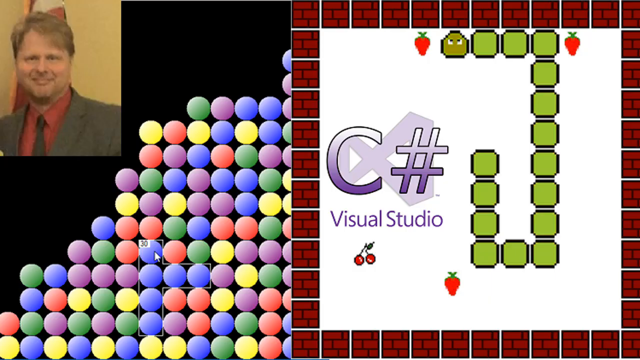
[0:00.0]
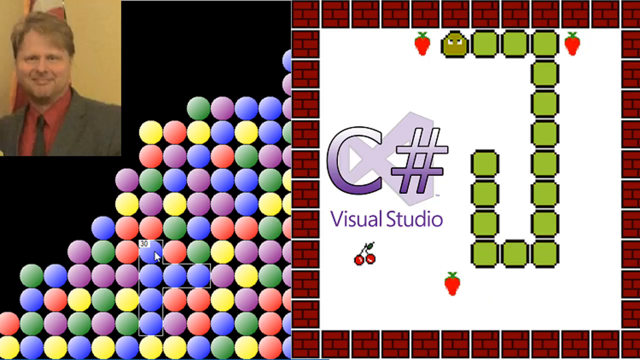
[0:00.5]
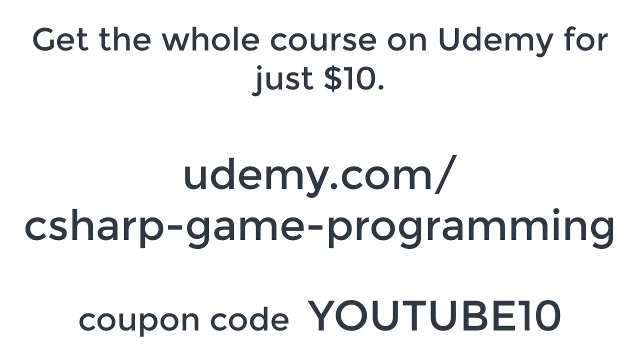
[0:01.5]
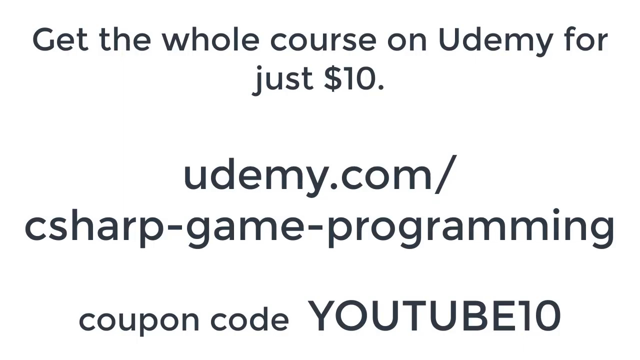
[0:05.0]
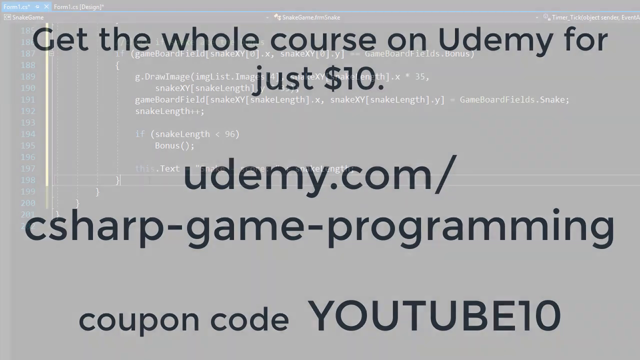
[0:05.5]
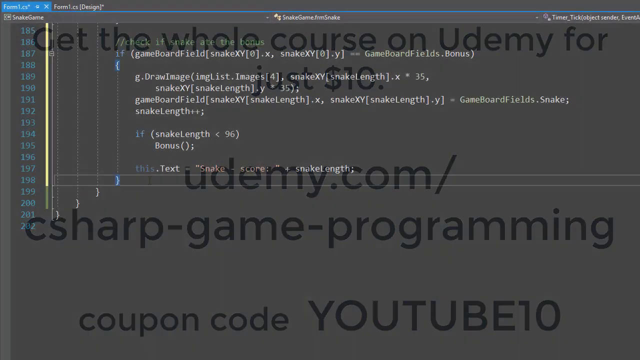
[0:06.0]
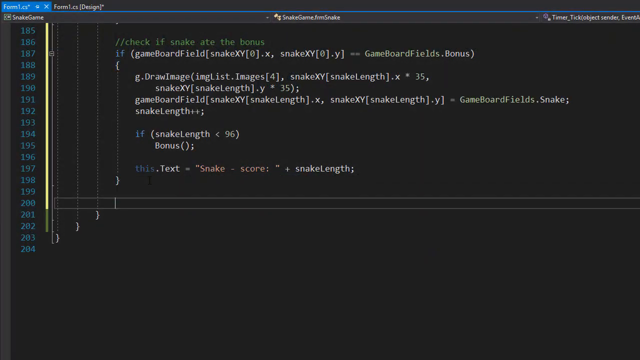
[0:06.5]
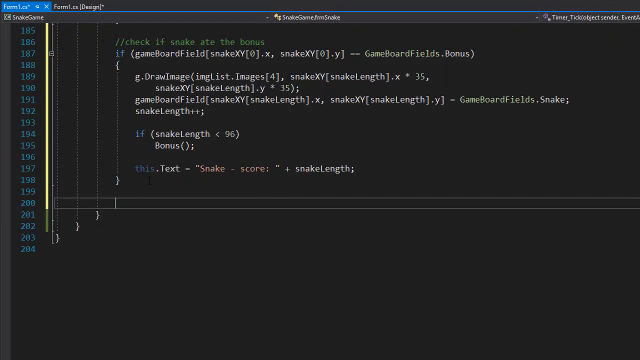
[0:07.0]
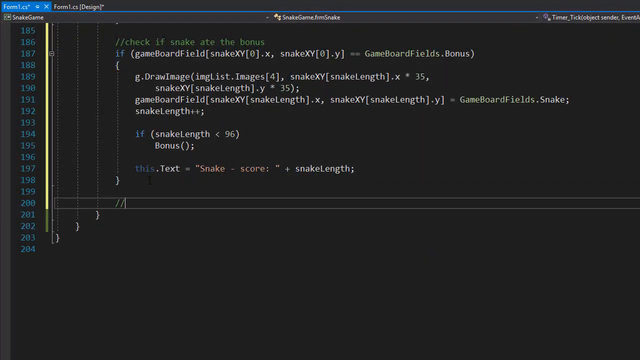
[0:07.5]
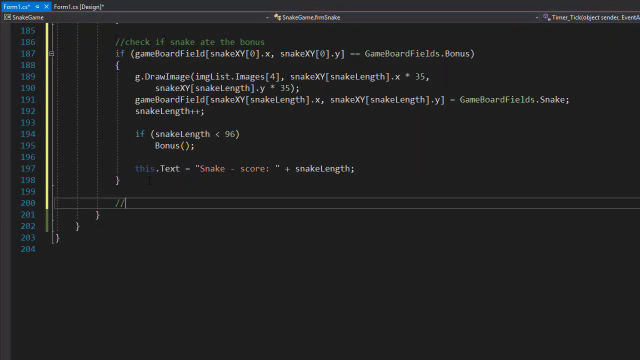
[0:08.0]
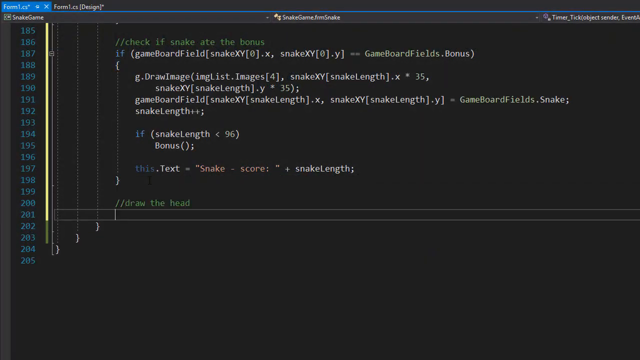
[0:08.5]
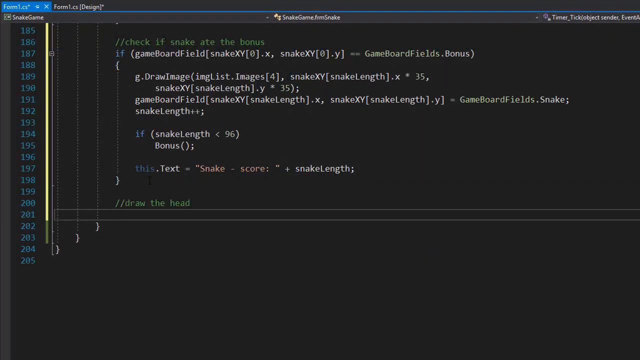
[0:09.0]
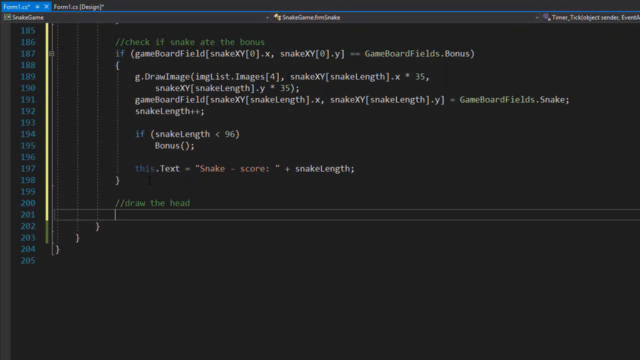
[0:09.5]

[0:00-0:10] The video opens on a screen with several images against a black background. In the top left-hand corner is a picture of a white man who appears to have brown hair, wearing a red button-up shirt, a black tie and a black overcoat, a three-piece suit. He stands in front of what appears to be an American flag on a manila or cream background. Circles of various colors are arranged in a grid-like pattern against the black backdrop. On the right side of the screen is the C Sharp Visual Studio logo with a cherry image beneath it and a strawberry next to it, similar to the Pac-Man aesthetic. Next to the logo is what is perhaps the letter J or D, made of pixelated 8-bit blocks. The top row of blocks begins with a strawberry, the second sprite looks like a Goomba character from the Mario game, and at the end of the row is another strawberry. The video then cuts to a white background with black text that reads "Get the whole course on Udemy for just $10." Beneath it in black text is "udemy.com/C Sharp game programming," and beneath that "coupon code YouTube10." The video then cuts to what appears to be an open compiler, perhaps Brackets or a similar programming editor, with what appears to be code for the game Snake.